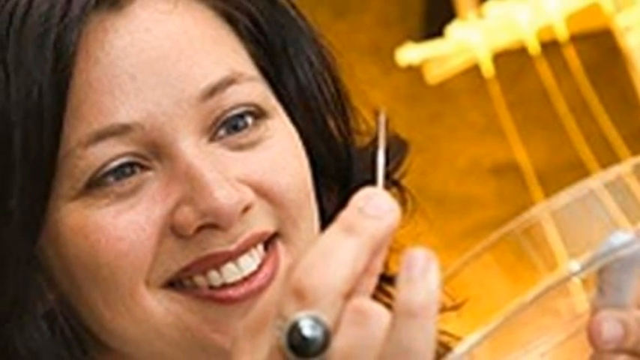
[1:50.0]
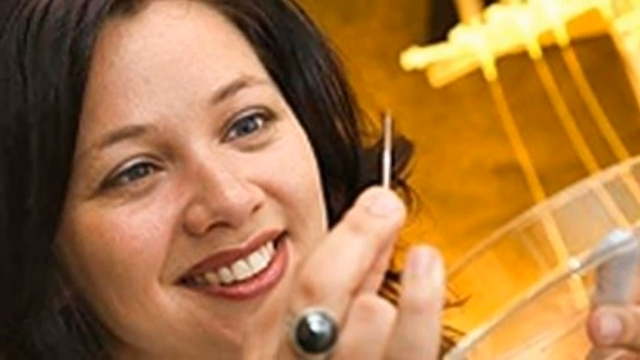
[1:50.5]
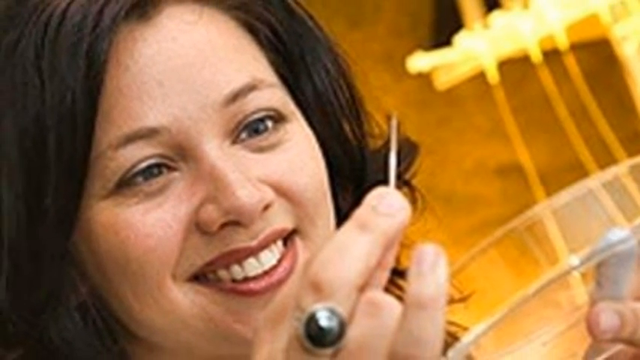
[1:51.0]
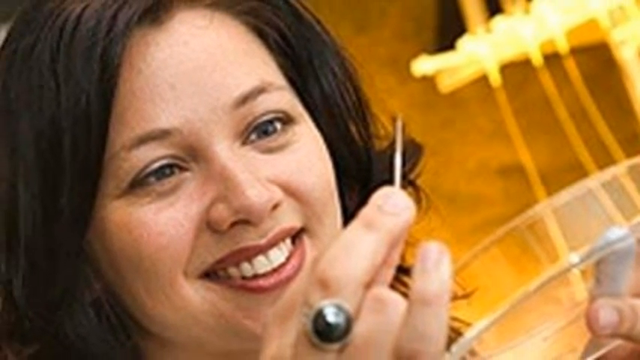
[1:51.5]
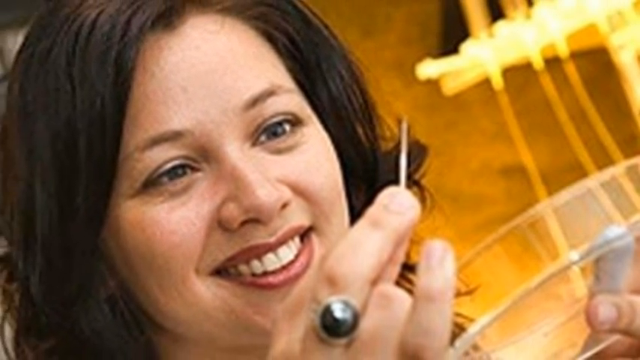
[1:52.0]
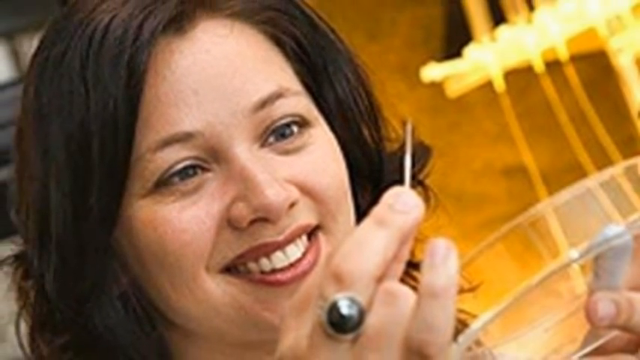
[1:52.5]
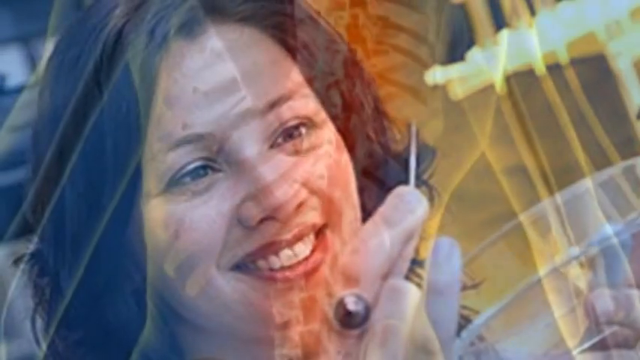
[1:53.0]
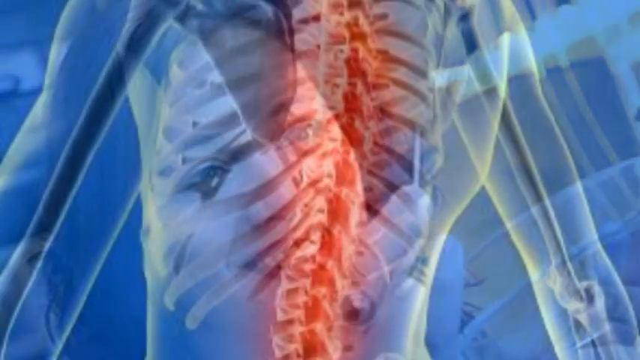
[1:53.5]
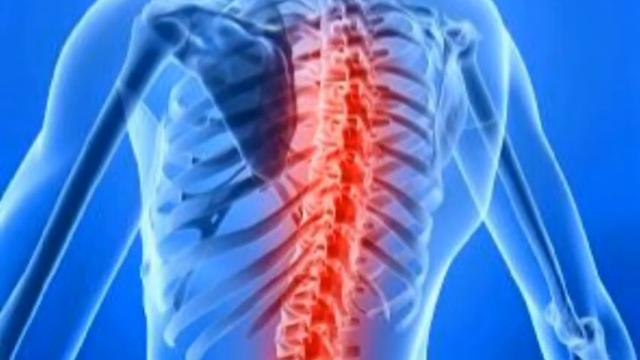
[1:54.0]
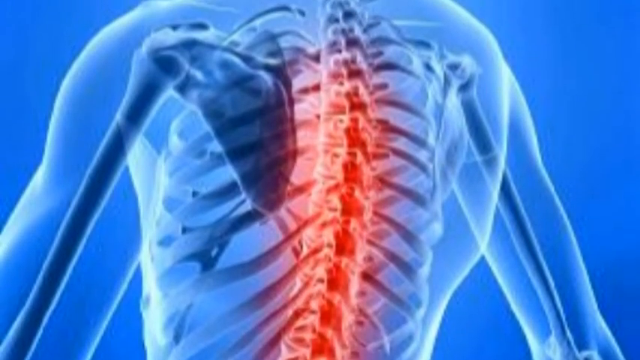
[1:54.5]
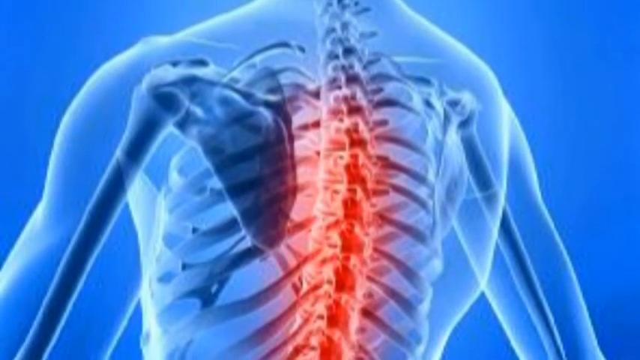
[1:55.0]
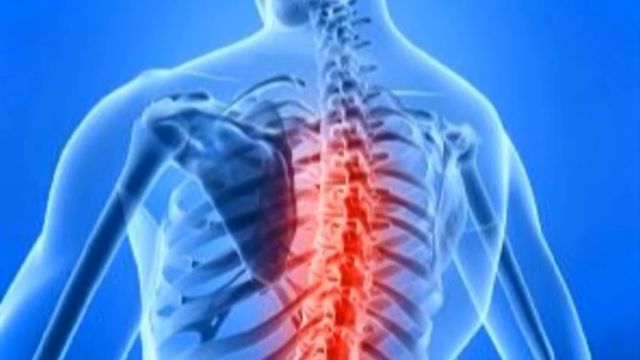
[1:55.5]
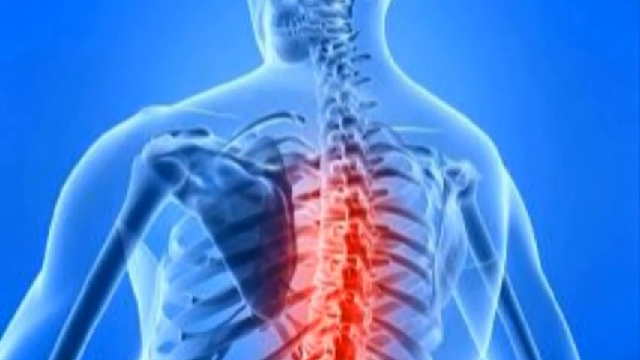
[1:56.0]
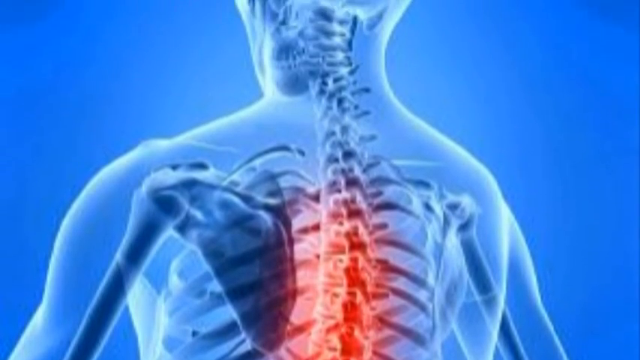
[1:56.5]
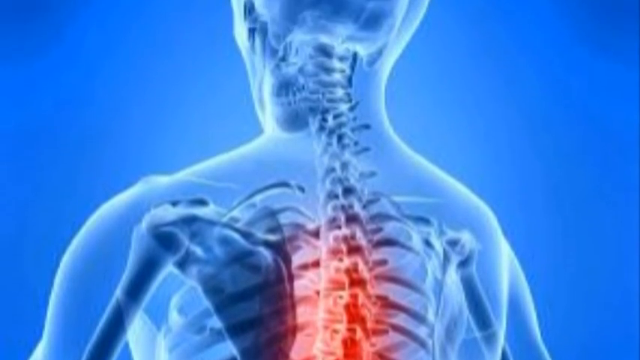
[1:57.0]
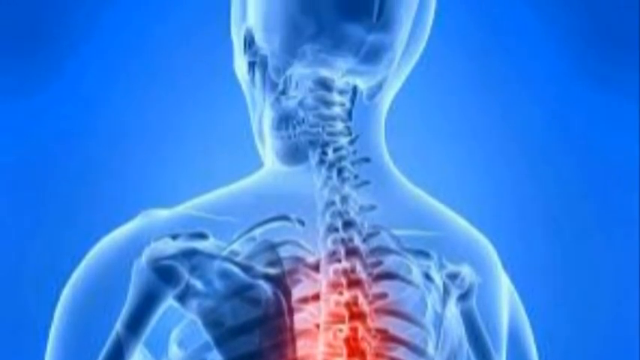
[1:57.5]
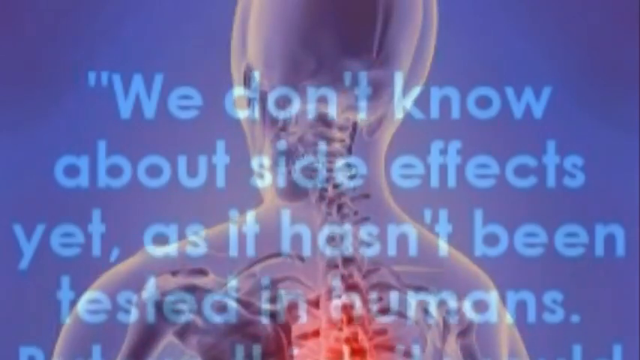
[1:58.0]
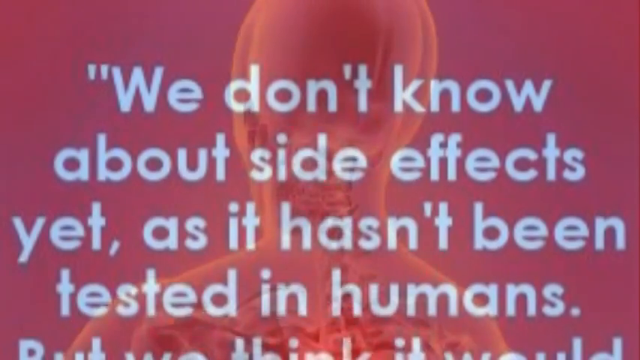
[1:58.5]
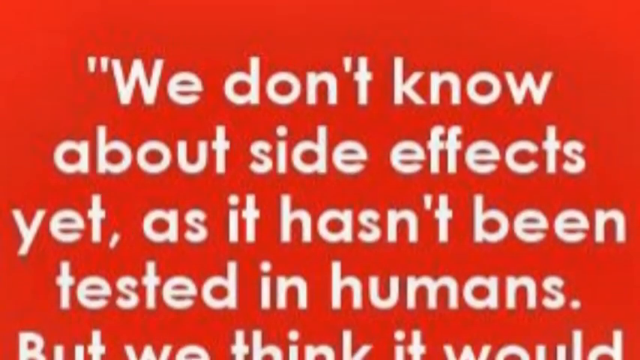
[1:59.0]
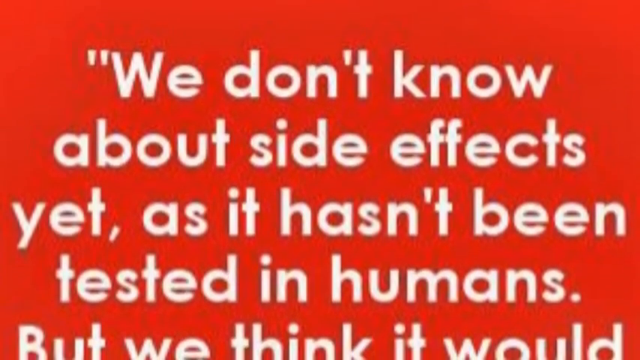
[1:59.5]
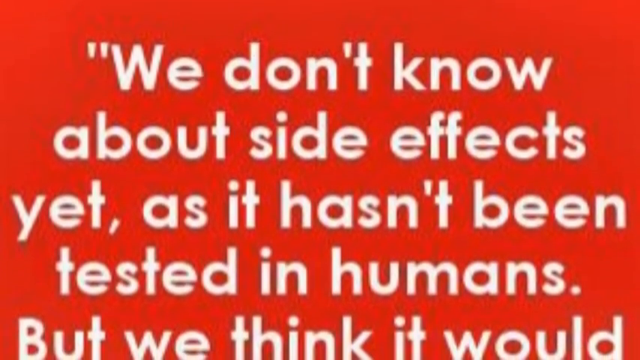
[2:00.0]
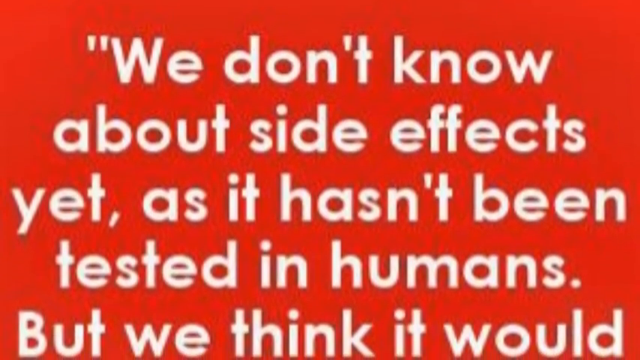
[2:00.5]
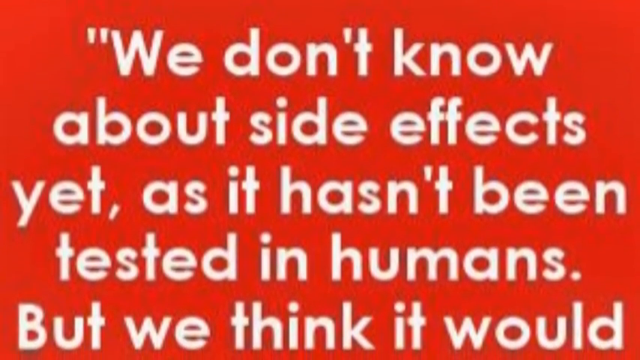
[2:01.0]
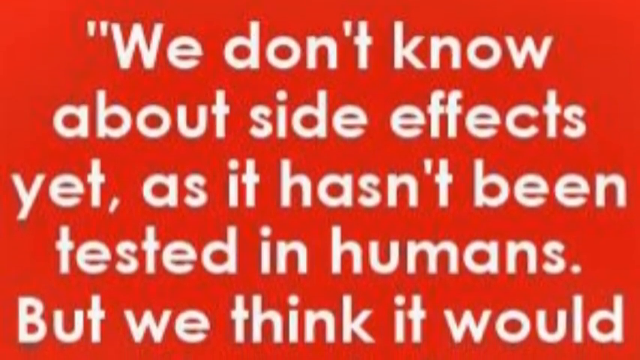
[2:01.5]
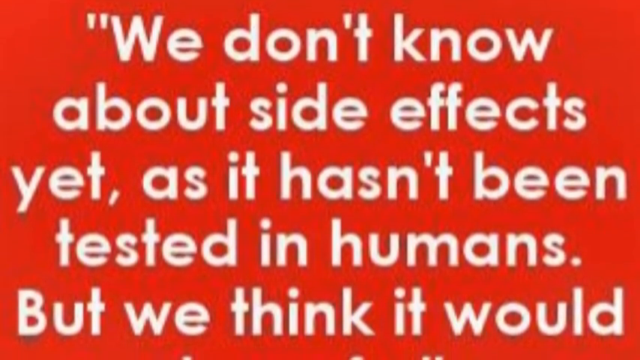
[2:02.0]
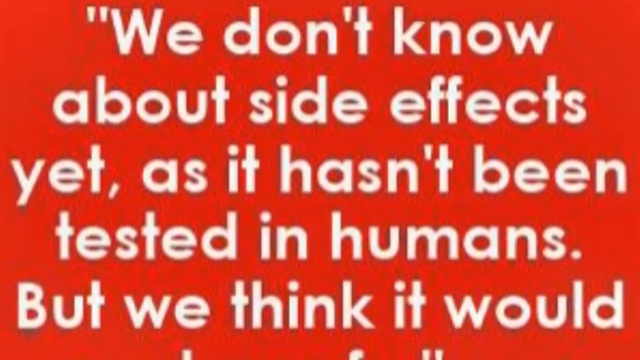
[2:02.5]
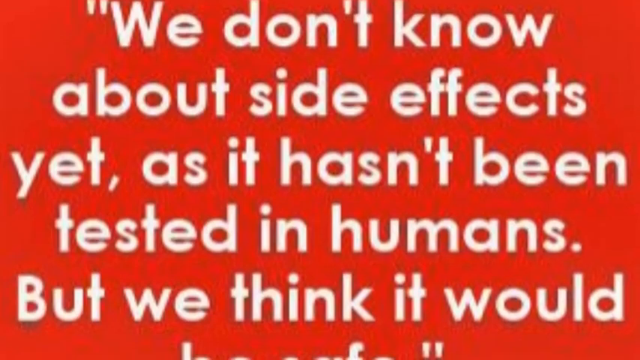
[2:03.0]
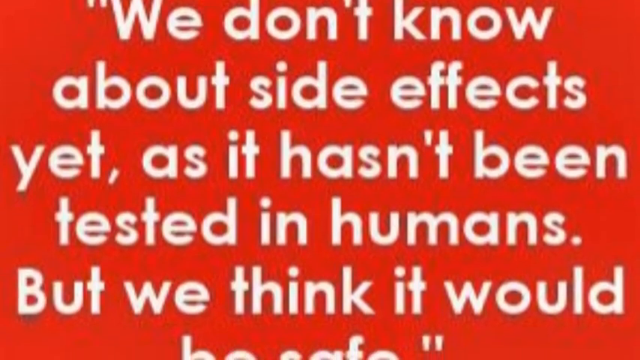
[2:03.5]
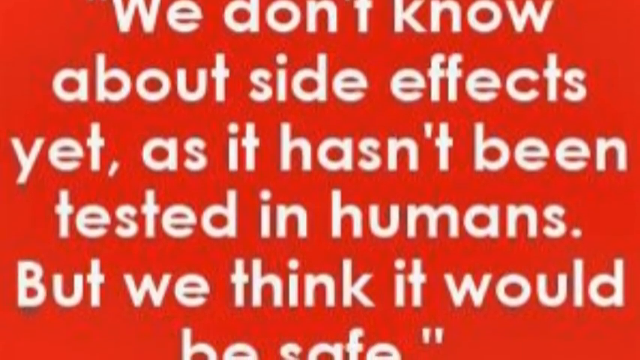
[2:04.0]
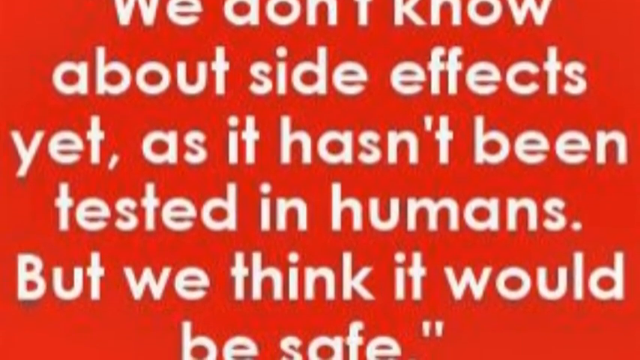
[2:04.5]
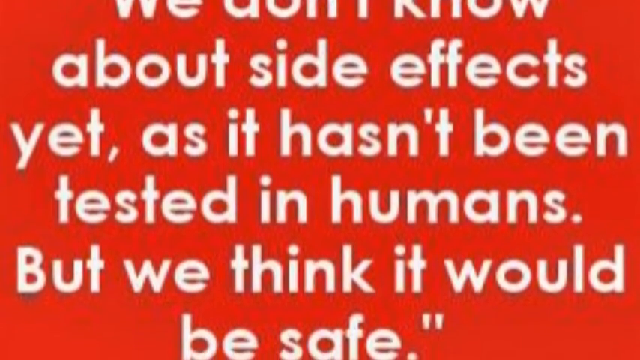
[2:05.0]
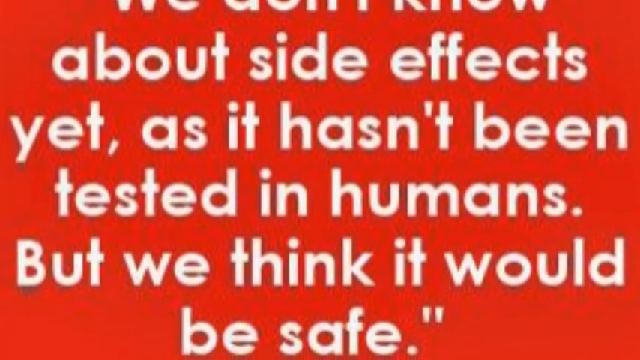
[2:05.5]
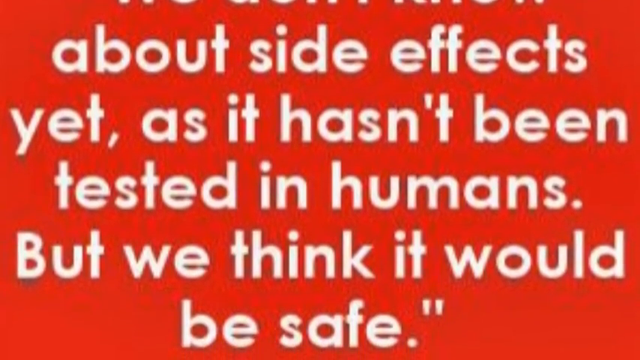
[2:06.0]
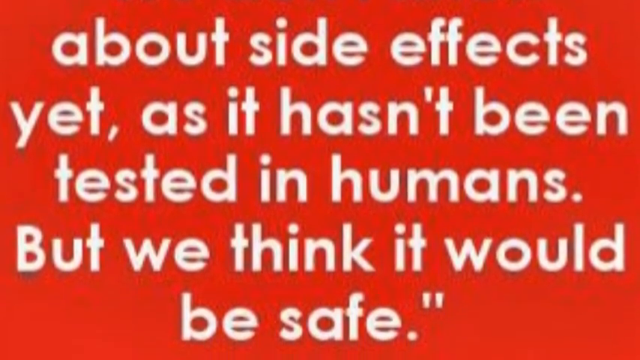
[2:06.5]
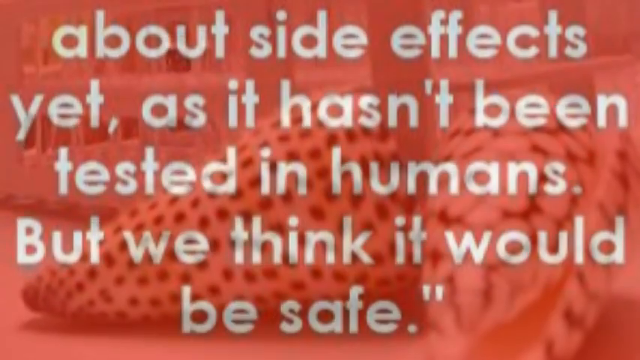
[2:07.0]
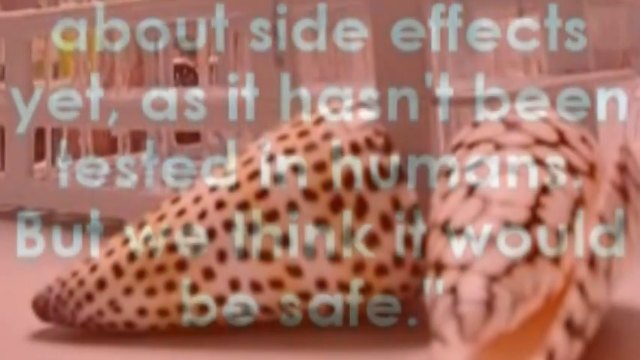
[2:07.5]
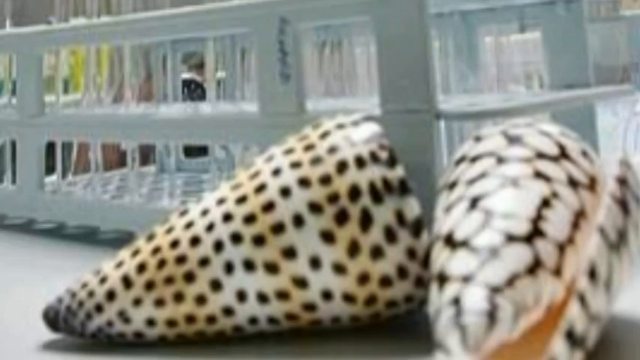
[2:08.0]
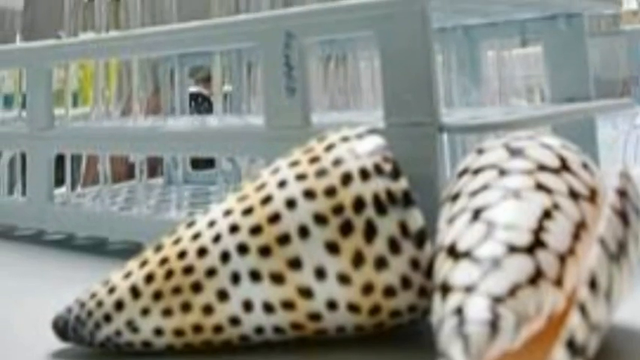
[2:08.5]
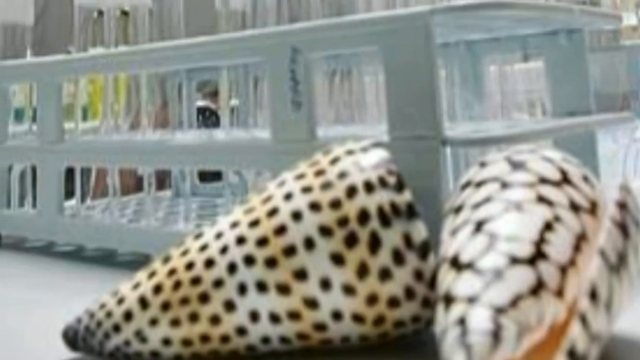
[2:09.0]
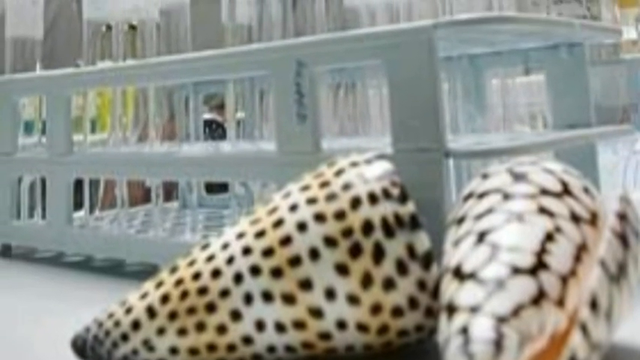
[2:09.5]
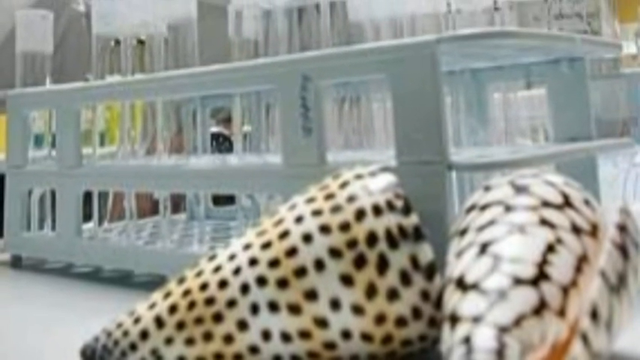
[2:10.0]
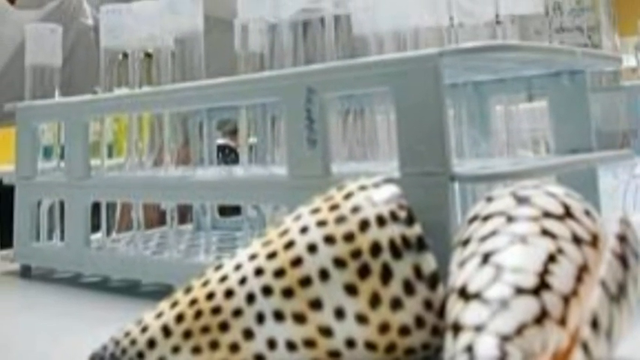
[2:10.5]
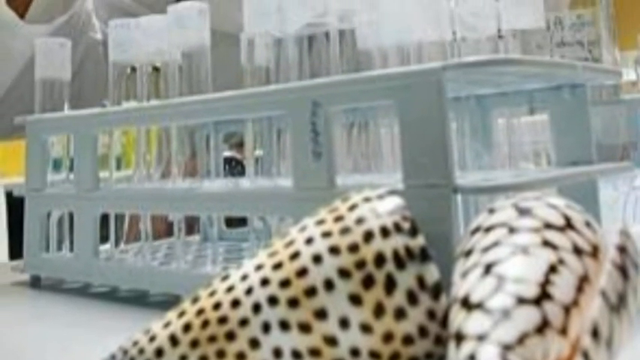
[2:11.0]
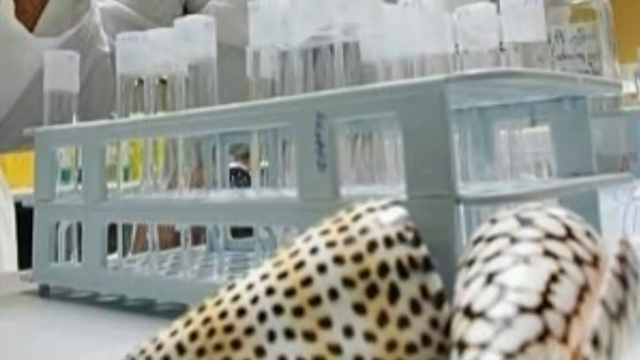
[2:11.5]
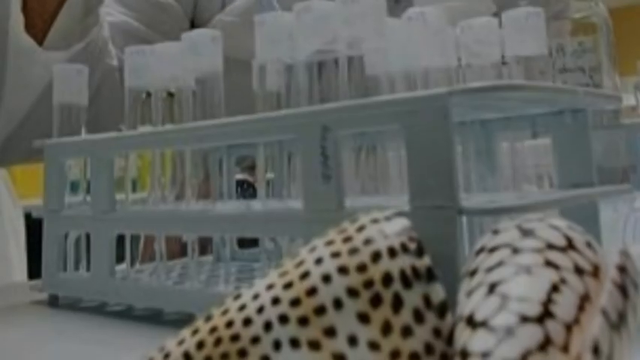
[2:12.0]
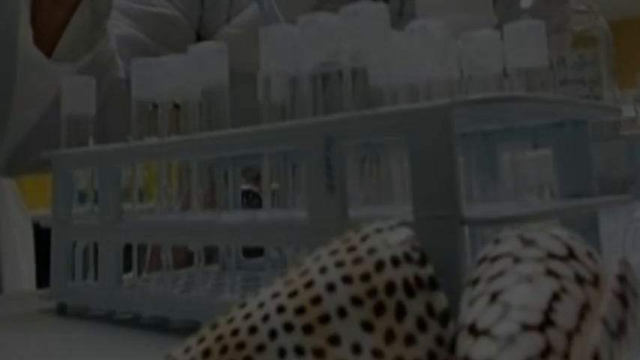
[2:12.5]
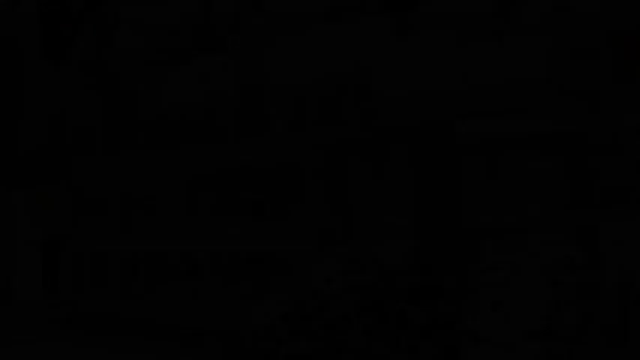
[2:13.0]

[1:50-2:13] The woman holds the needle, smiling, as the camera zooms out slowly. The camera then pans or tilts upward over a graphic of a partial x-ray-type cutaway of a person's skeleton from behind. The graphic is predominantly blue on a blue background, with the spinal cord and spinal column area highlighted in red. The camera pans and tilts up, gradually transitioning to a text graphic with an all-red background, on which white block letters read: "we don't know about side effects yet, as it hasn't been tested in humans, but we think it would be safe." More shots show a lab with a holder of many test tubes and some shells from the sea creature on the table. The video then fades to black.